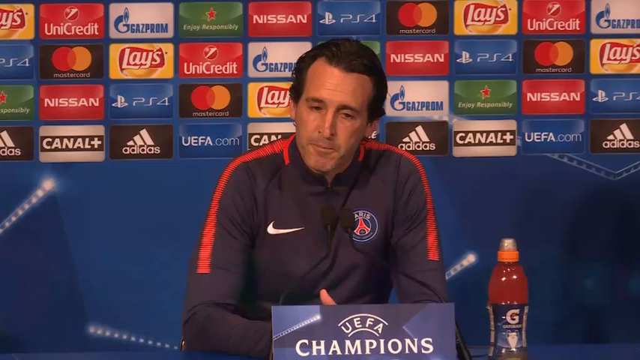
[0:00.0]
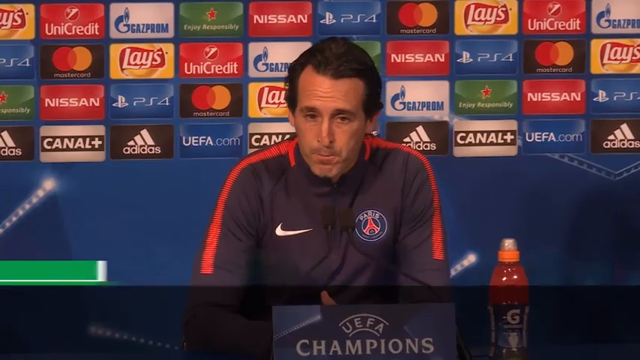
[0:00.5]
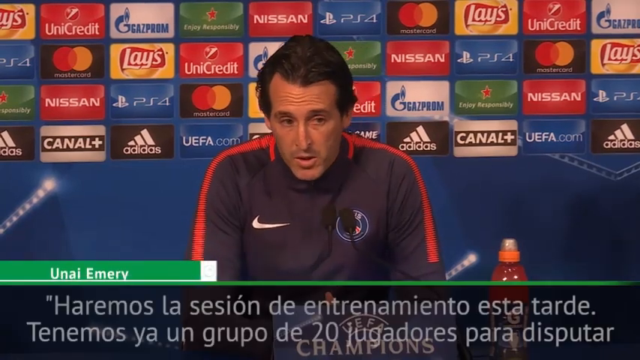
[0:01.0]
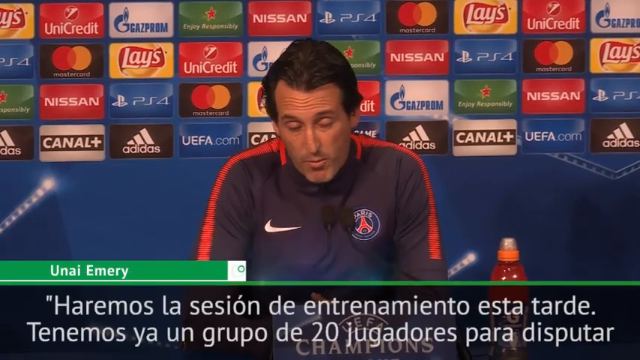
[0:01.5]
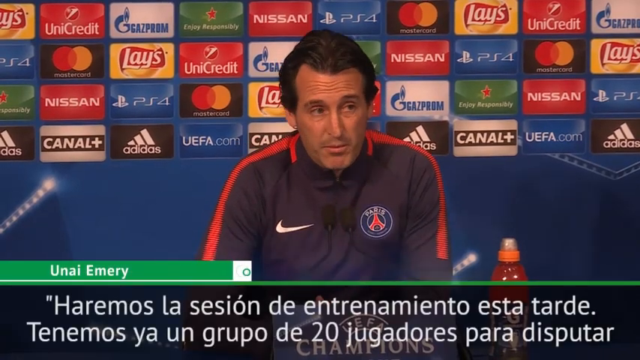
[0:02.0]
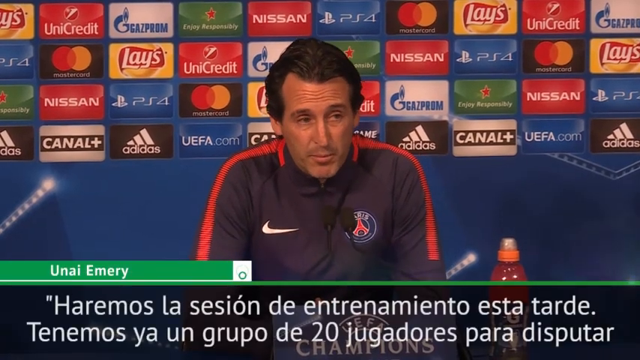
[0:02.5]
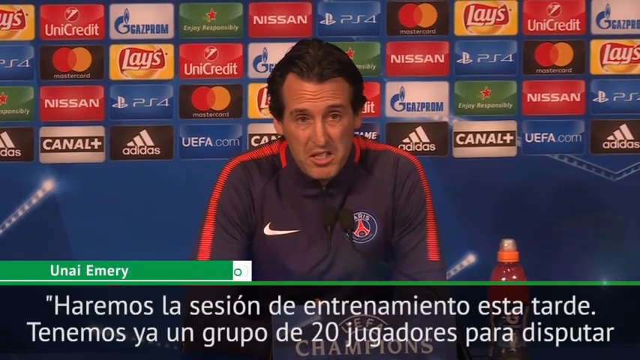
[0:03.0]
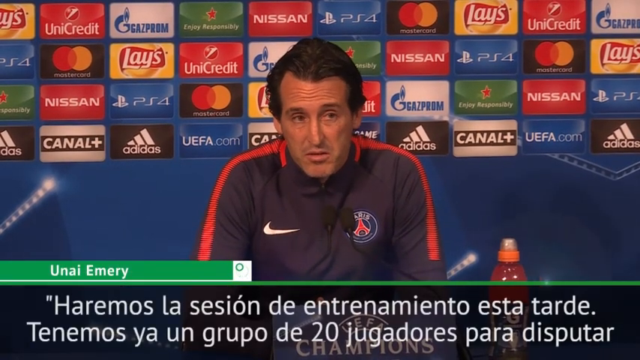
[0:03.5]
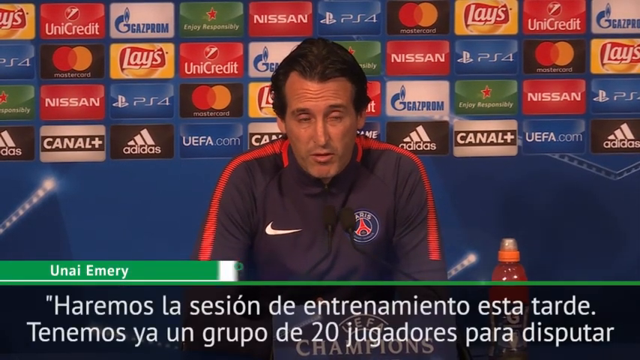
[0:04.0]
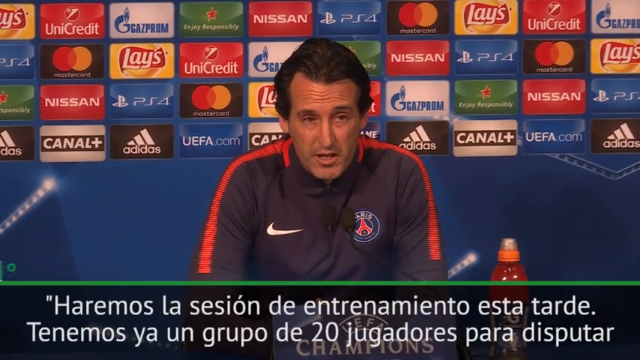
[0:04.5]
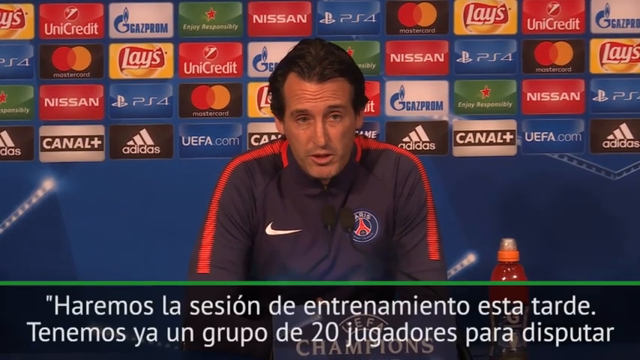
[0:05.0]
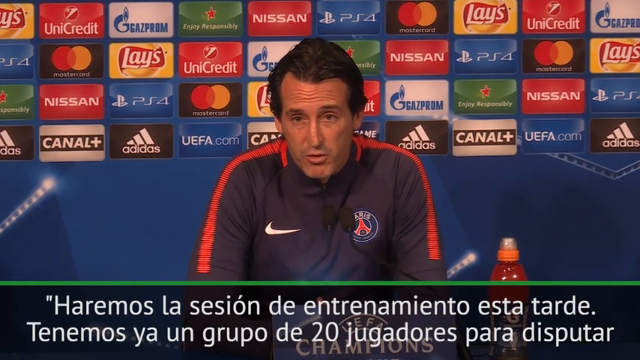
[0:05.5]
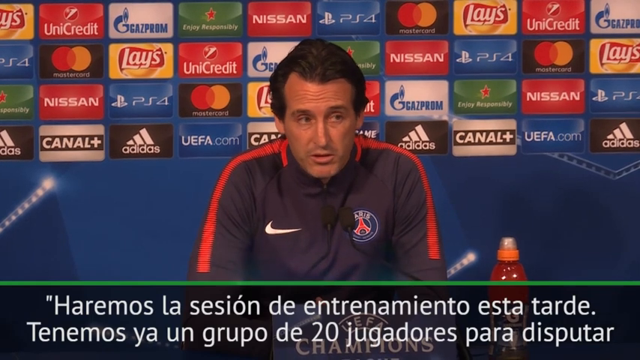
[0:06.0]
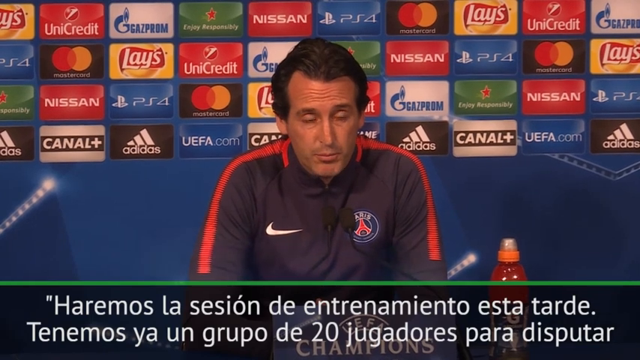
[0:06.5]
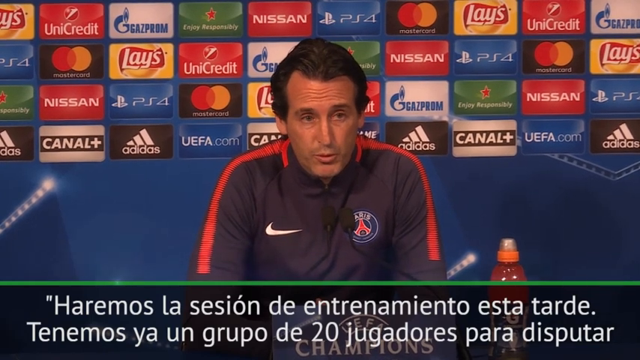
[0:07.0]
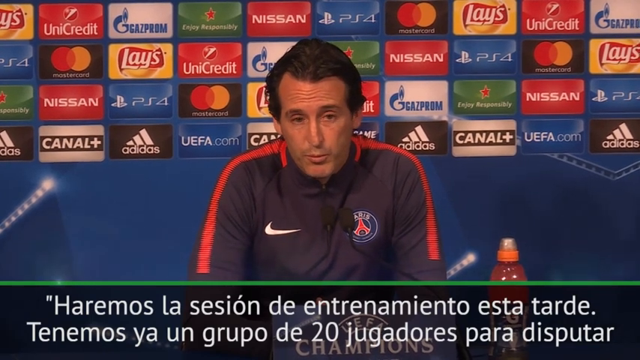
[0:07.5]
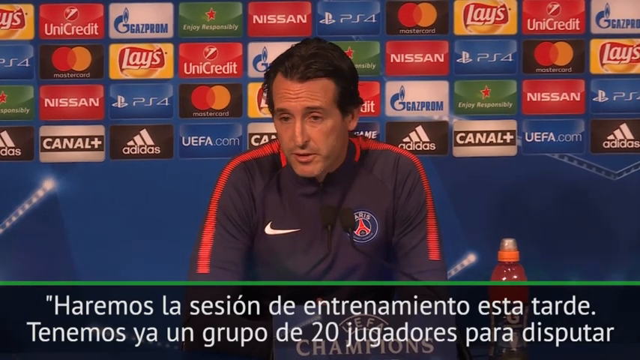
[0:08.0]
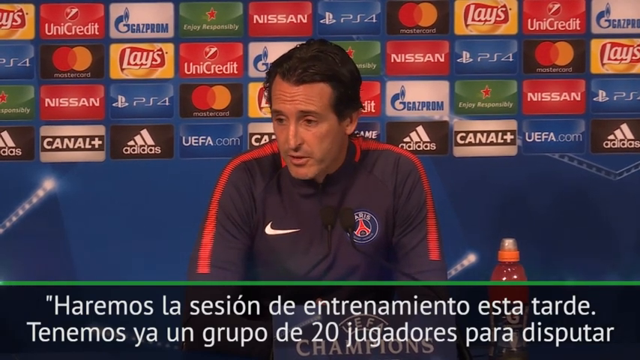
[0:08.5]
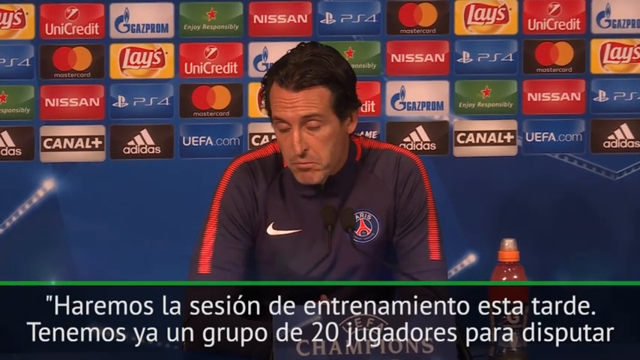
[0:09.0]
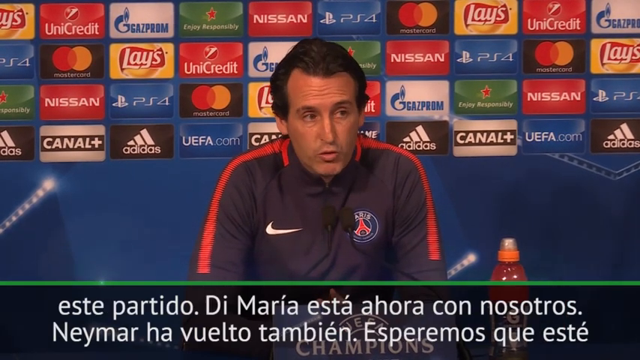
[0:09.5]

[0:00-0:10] A man named Unai Emery sits in front of a wall covered with quite a few advertisements, which look like ads for very large national brands: Lays, MasterCard, Adidas, Nissan, PSA and Unicredit are visible, some in English and some not. He wears what looks like some type of sports jacket. He is speaking, apparently in Spanish, from behind a table or desk, and the people he is addressing are not visible. It looks like he is giving a press conference.